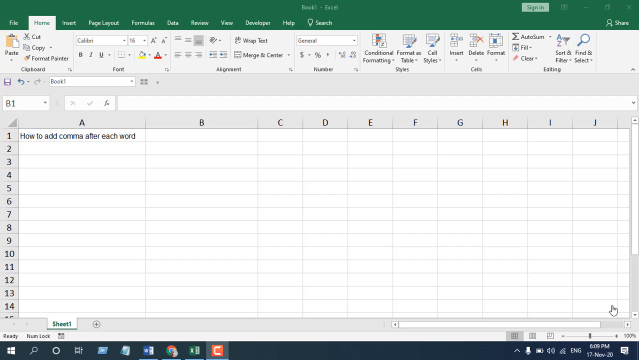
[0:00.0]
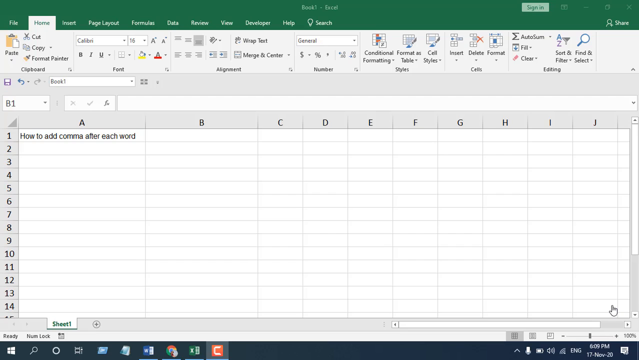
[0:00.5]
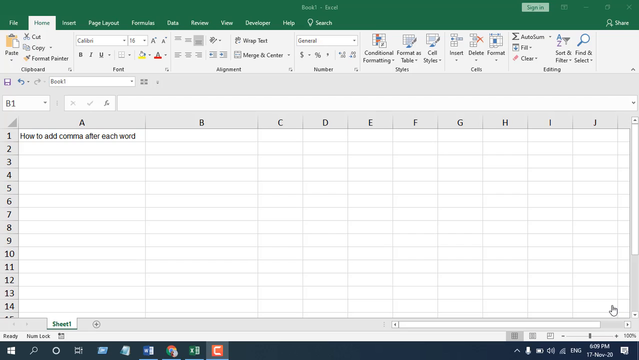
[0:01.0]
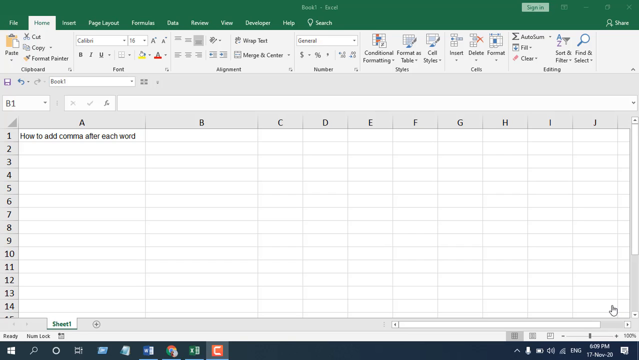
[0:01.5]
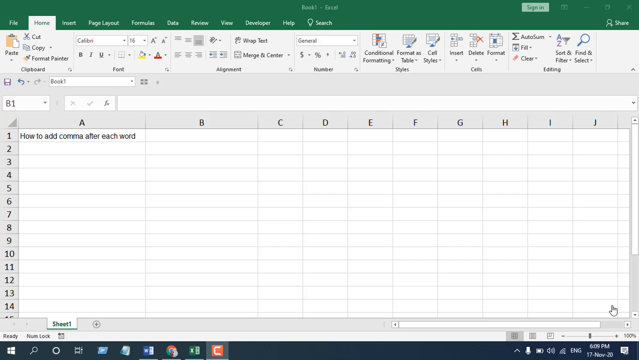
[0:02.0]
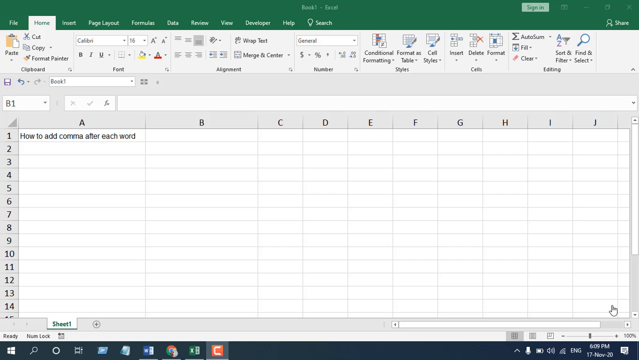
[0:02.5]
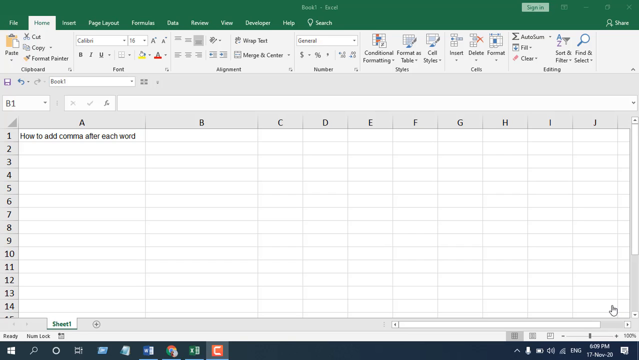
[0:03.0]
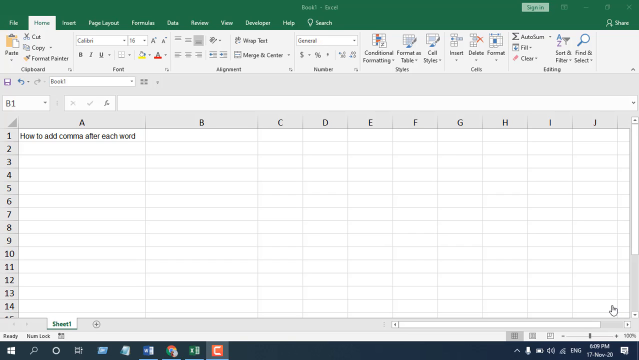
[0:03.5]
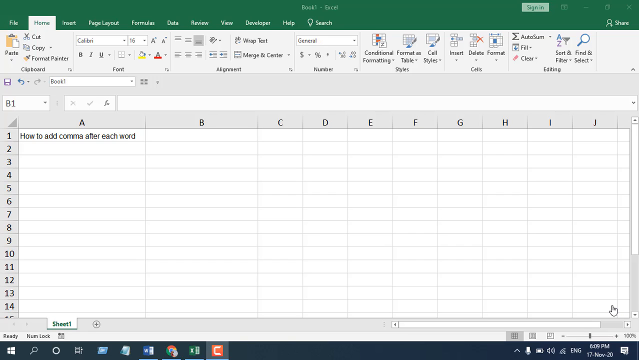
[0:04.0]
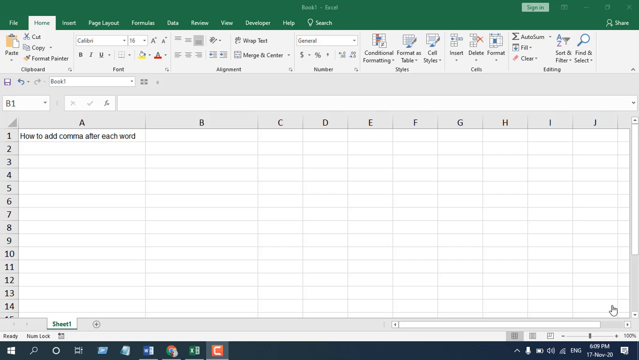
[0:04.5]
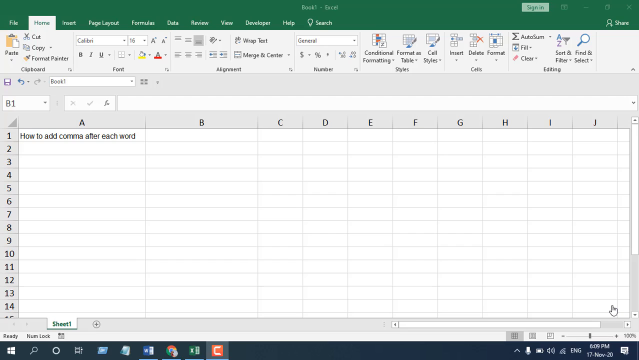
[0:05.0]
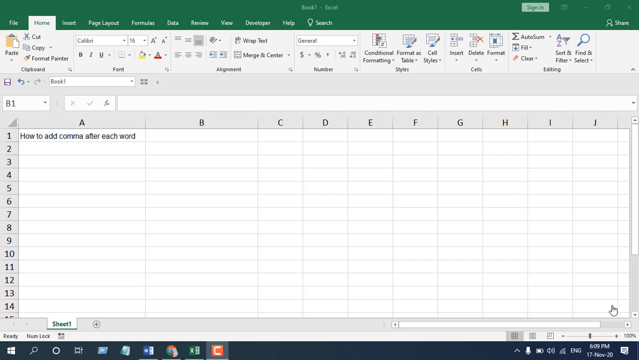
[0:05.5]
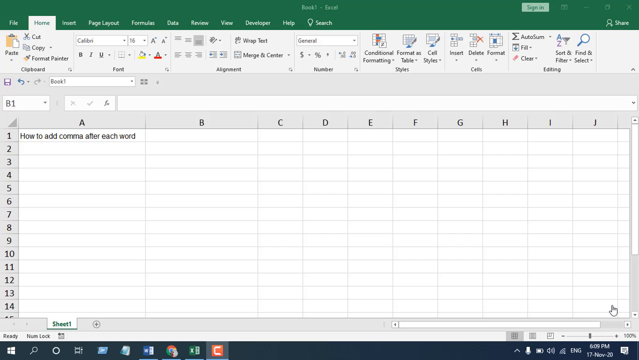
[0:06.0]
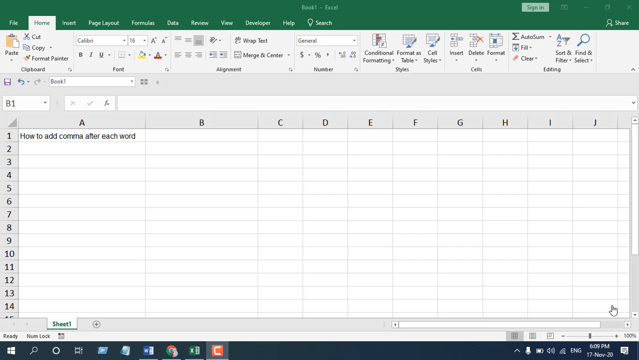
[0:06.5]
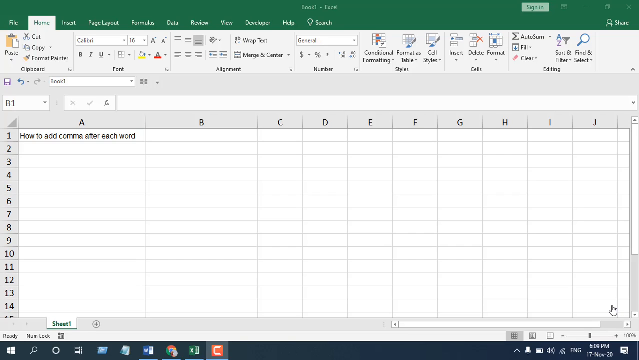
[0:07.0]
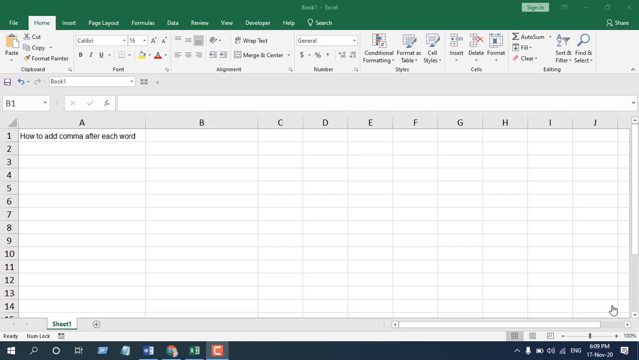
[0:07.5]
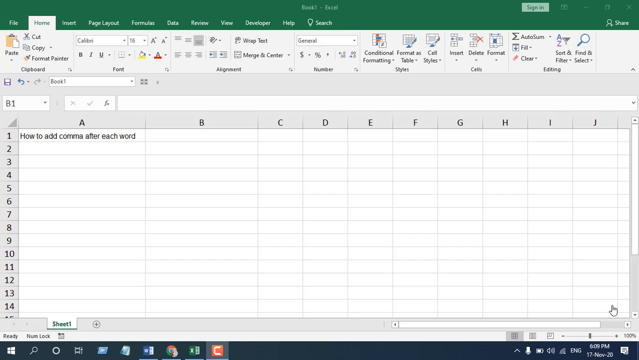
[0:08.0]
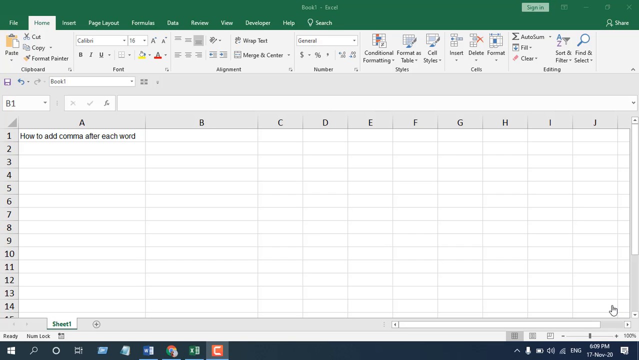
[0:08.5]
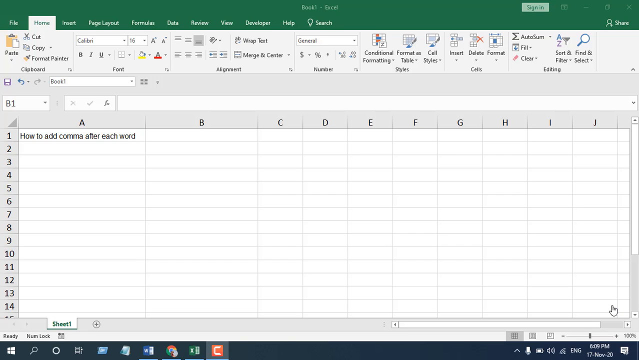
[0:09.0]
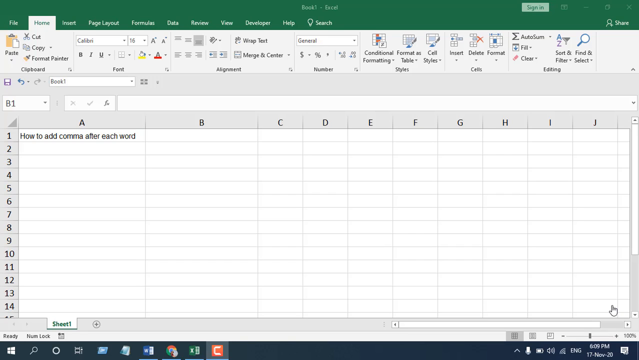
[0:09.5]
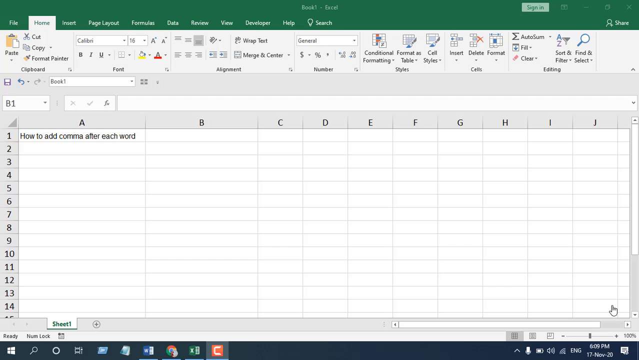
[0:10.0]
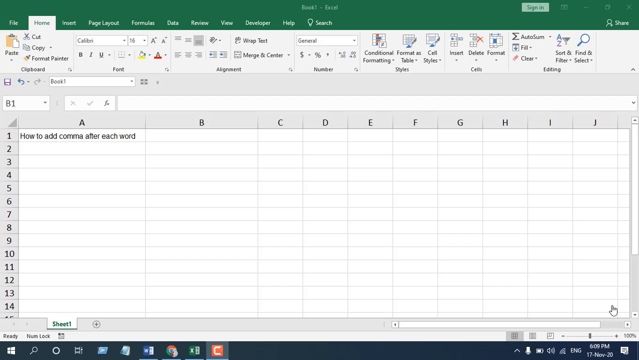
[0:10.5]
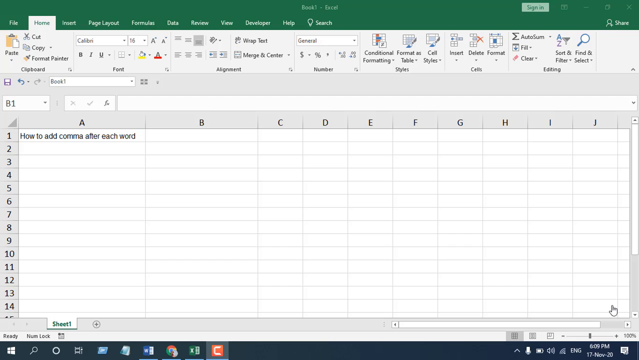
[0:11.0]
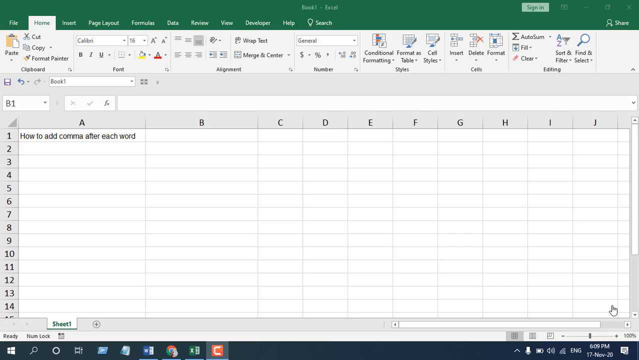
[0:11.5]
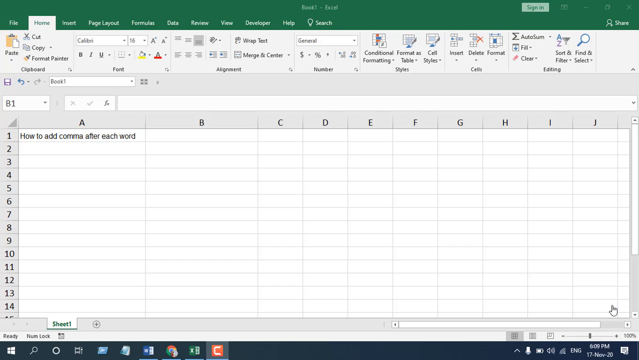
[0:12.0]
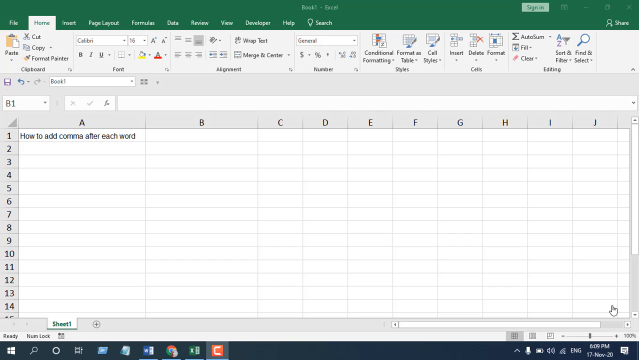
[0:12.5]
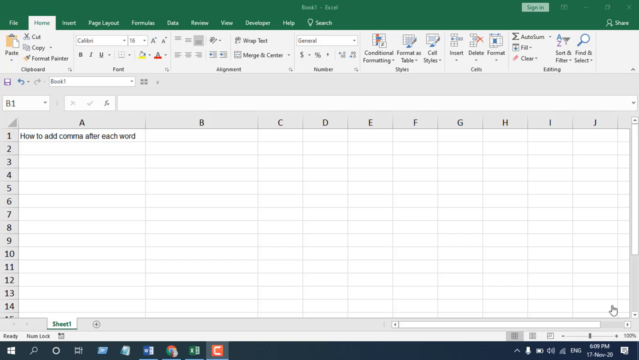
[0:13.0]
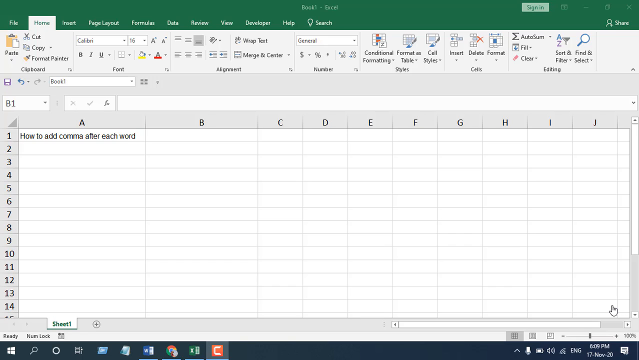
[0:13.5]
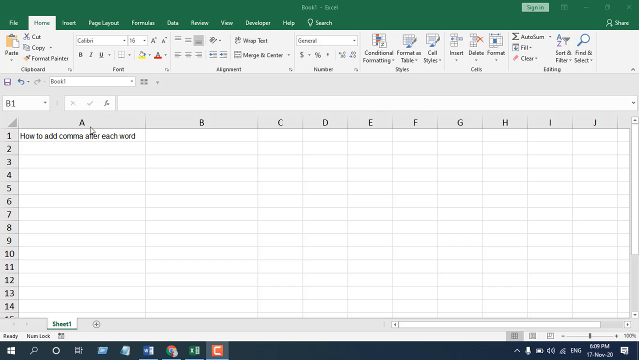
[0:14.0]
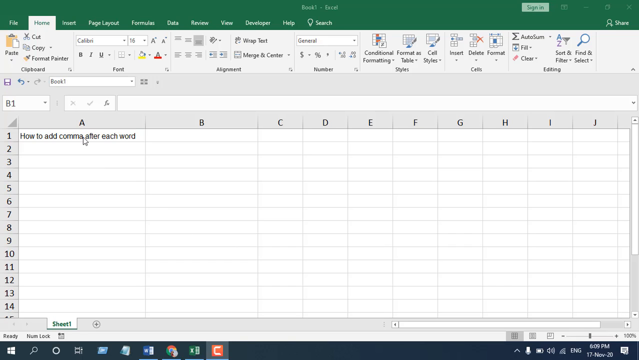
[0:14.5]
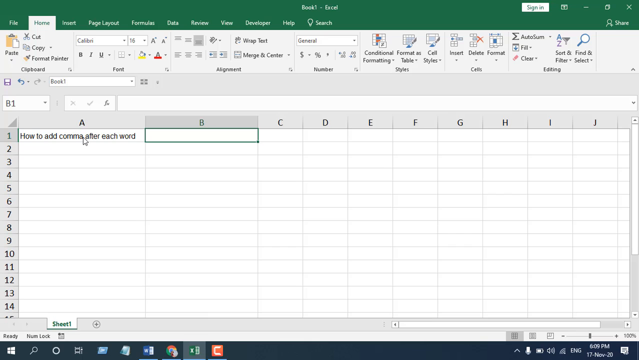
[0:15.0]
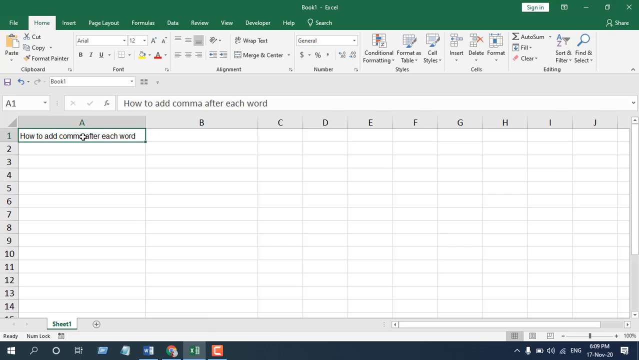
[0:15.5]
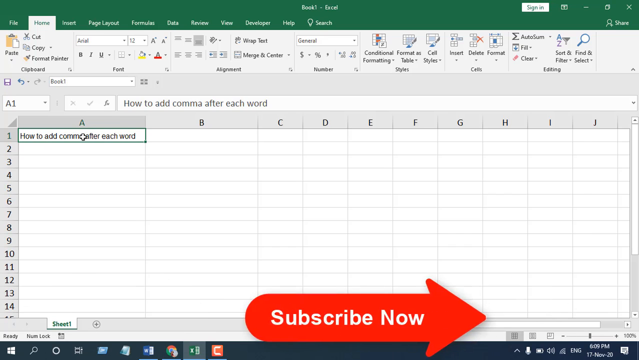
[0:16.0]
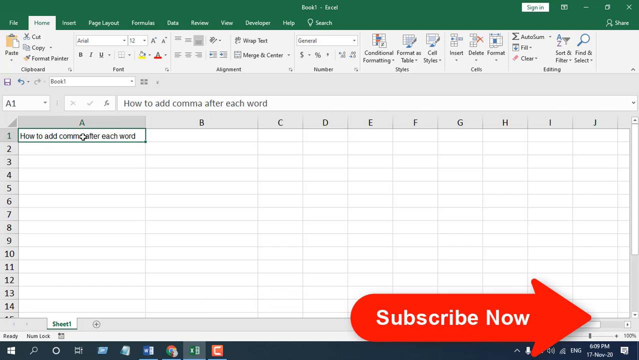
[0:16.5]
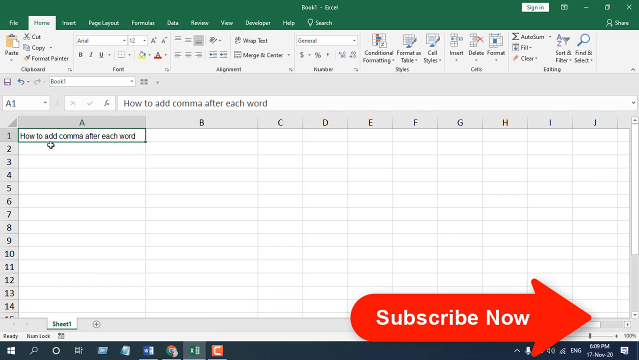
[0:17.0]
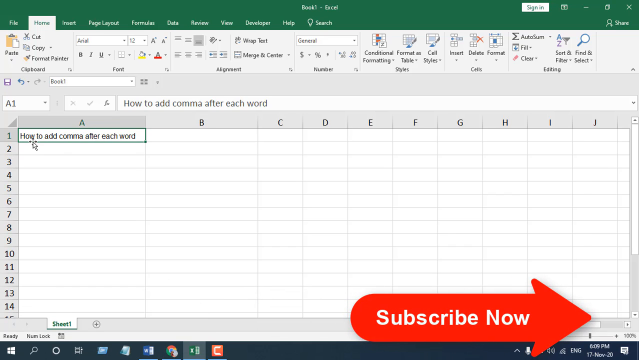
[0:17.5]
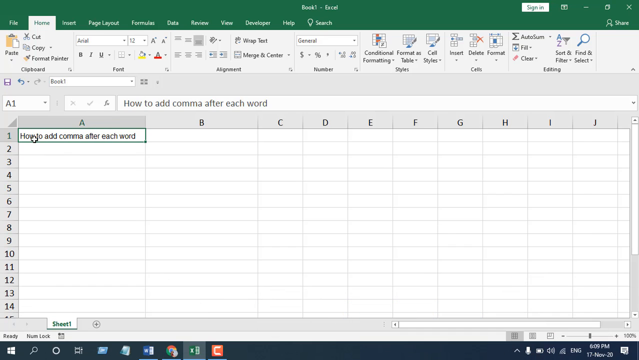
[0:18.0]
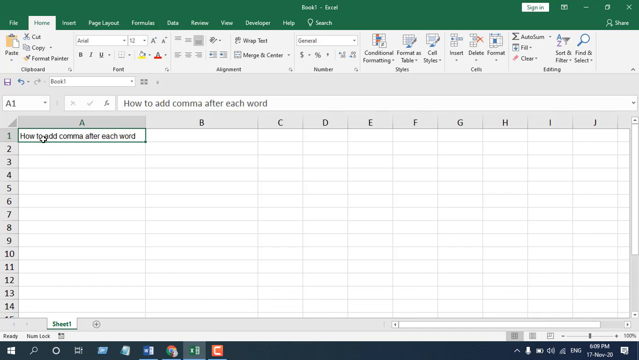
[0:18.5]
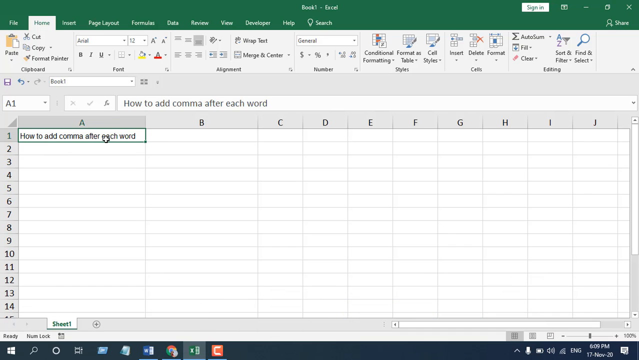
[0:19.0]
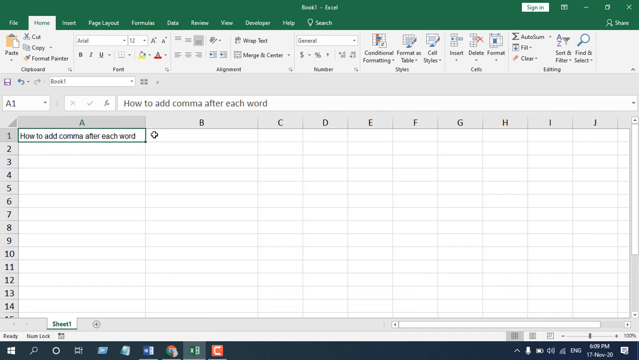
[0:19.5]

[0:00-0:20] A spreadsheet is open on the Home tab in Excel, and cell number one reads "how to add comma after each word". The mouse moves across the screen, and a big red arrow pops up saying "subscribe now" and points to the side. Meanwhile, the person making the video highlights the wording in box one, "how to add comma after each word". They then move the mouse off it, and the screen goes blank again.